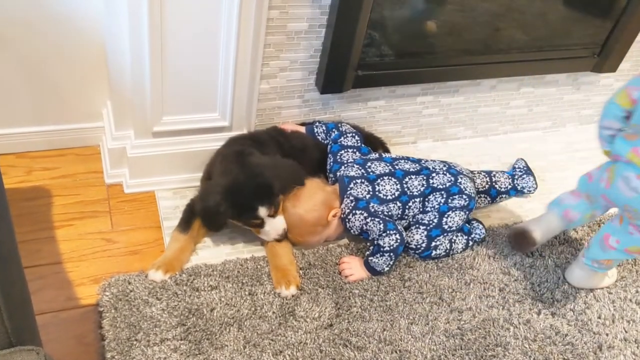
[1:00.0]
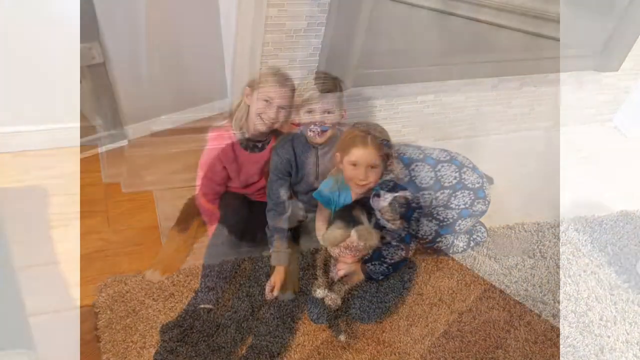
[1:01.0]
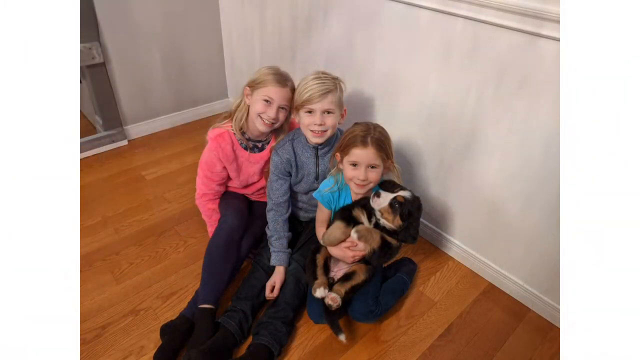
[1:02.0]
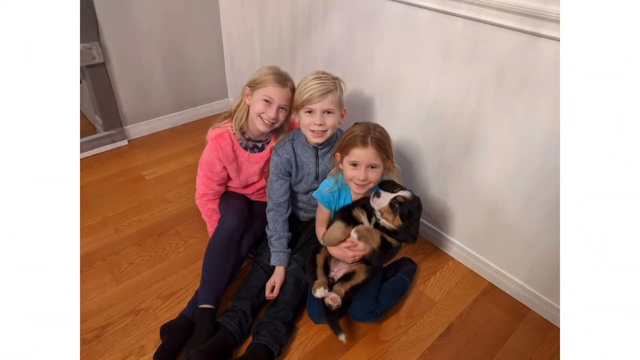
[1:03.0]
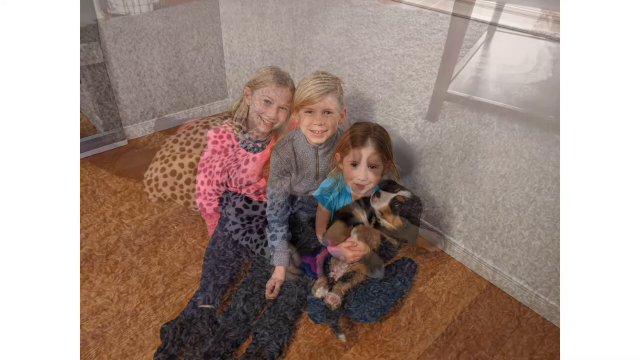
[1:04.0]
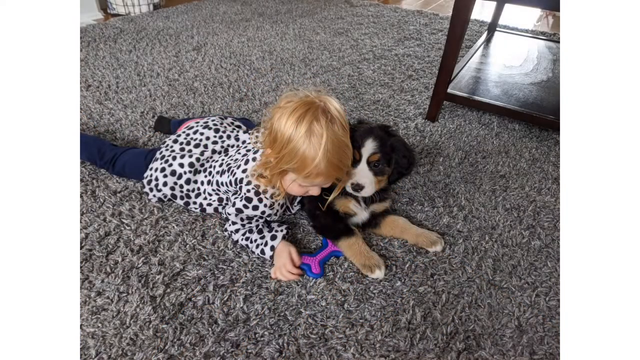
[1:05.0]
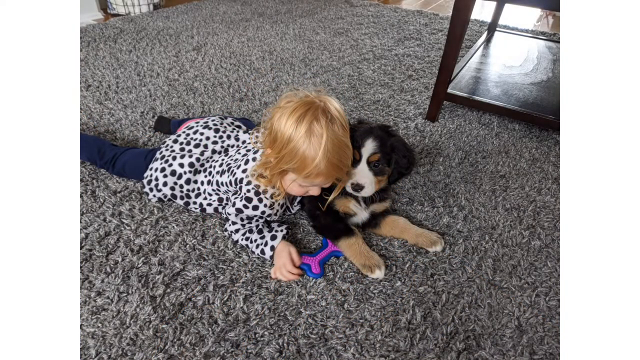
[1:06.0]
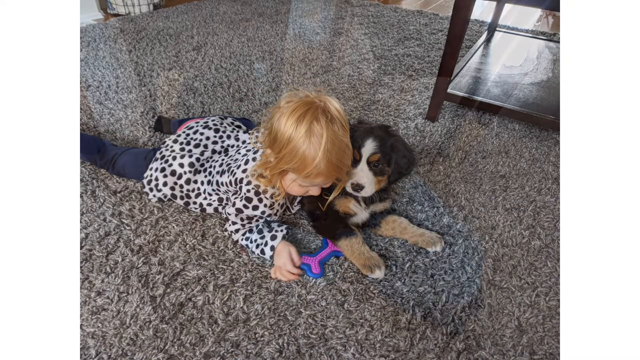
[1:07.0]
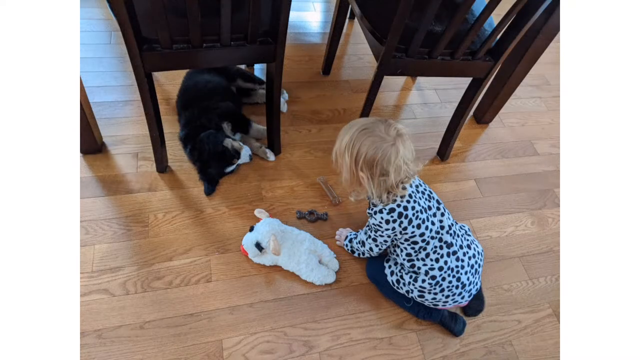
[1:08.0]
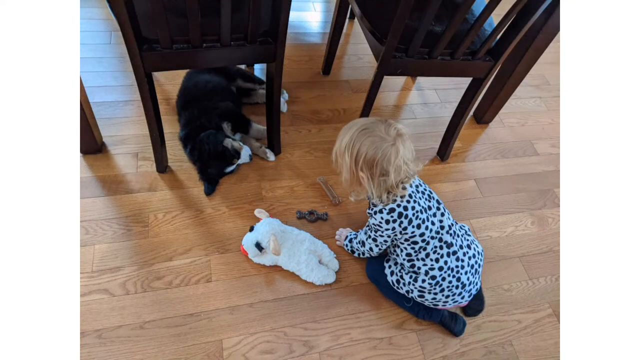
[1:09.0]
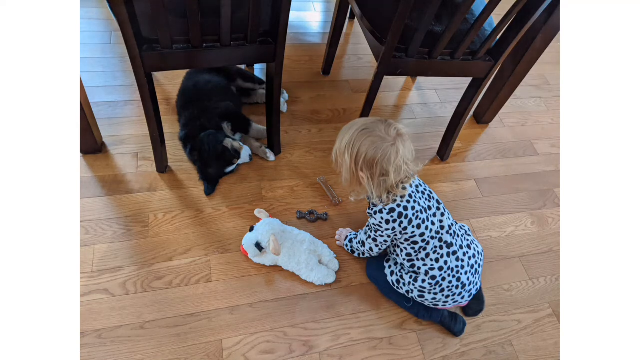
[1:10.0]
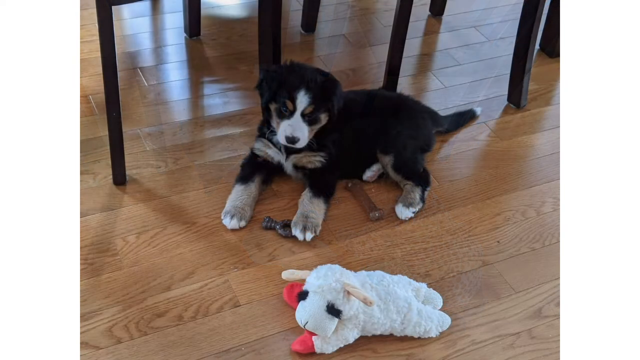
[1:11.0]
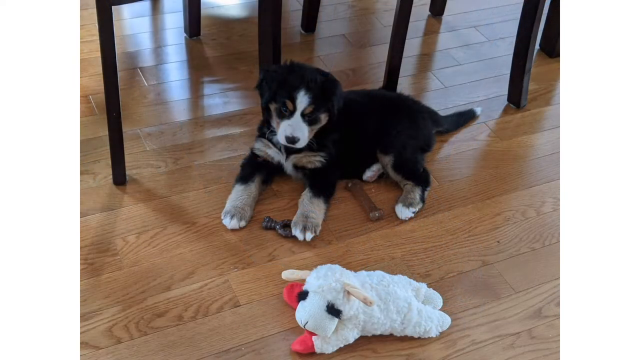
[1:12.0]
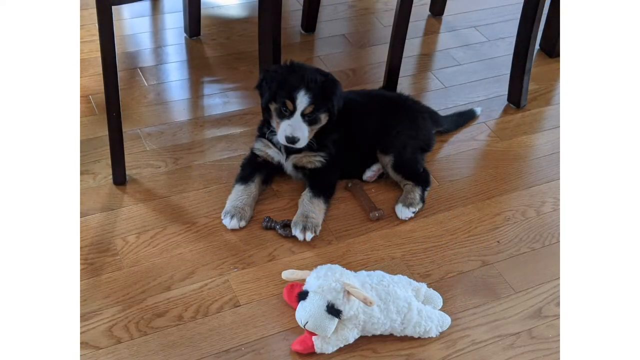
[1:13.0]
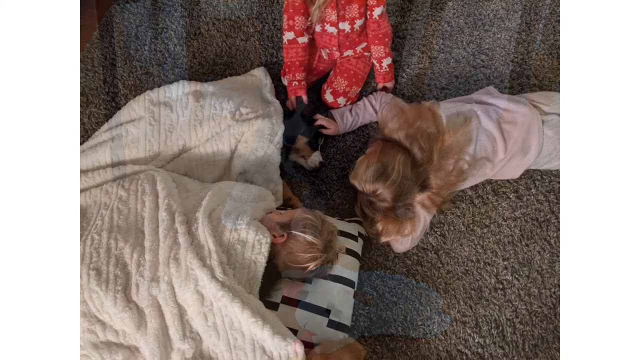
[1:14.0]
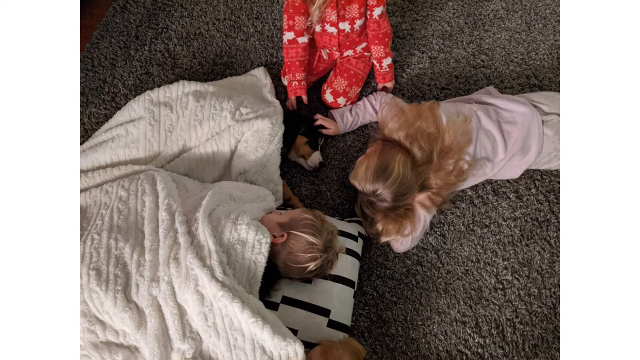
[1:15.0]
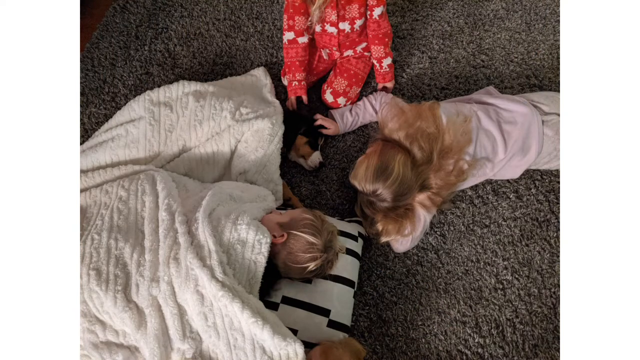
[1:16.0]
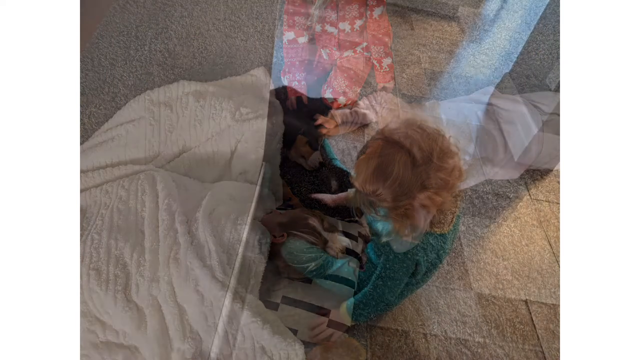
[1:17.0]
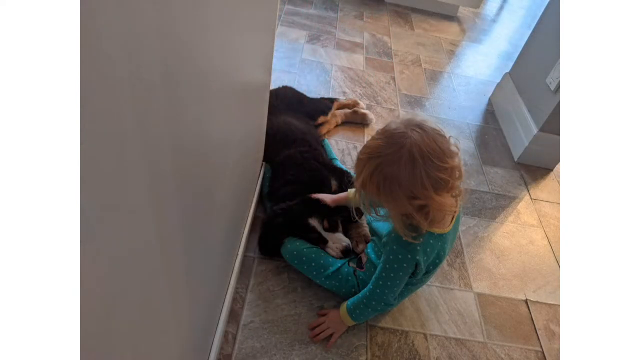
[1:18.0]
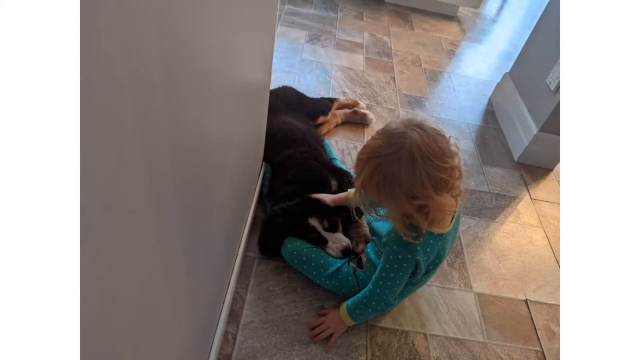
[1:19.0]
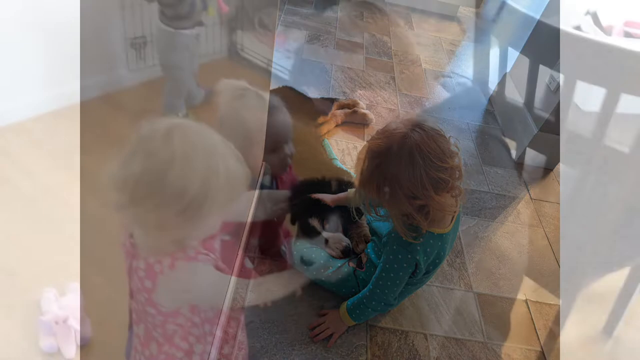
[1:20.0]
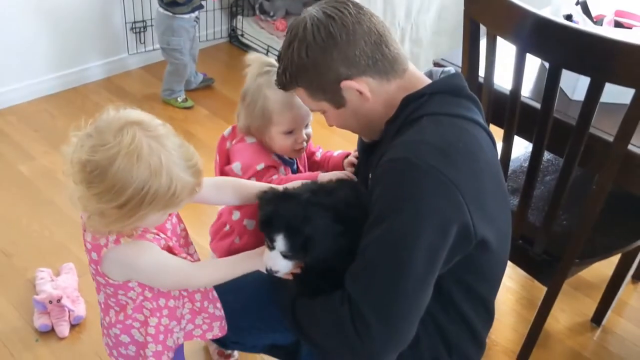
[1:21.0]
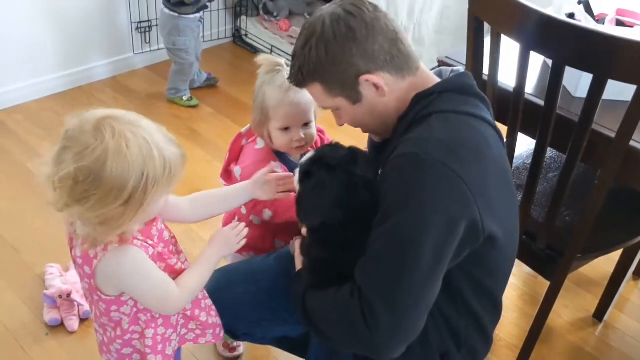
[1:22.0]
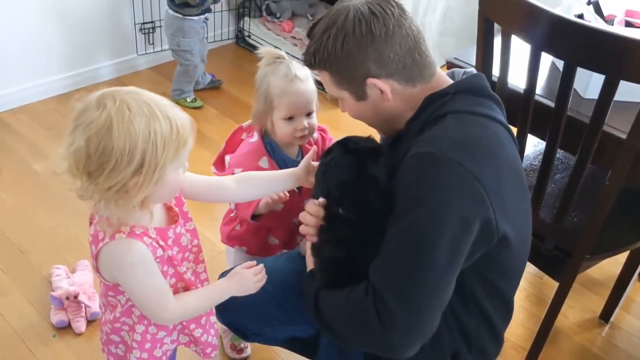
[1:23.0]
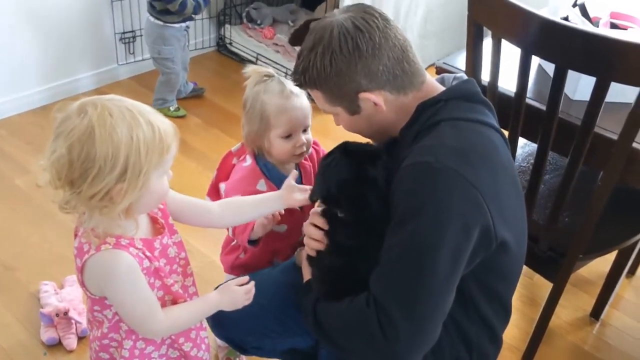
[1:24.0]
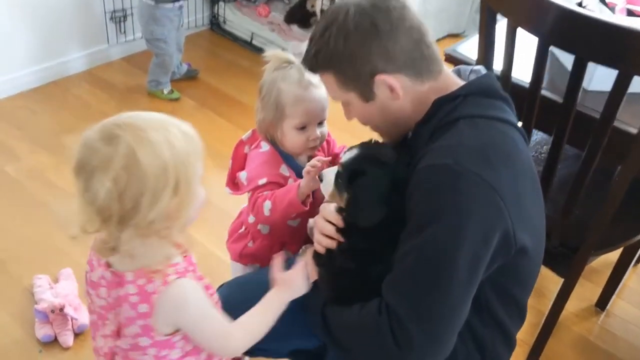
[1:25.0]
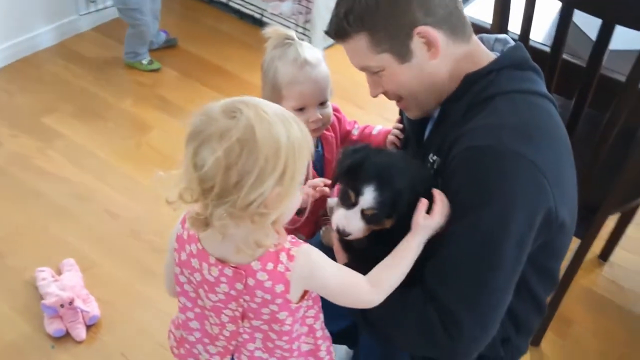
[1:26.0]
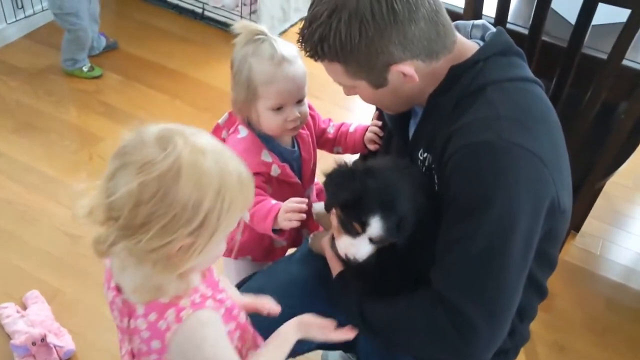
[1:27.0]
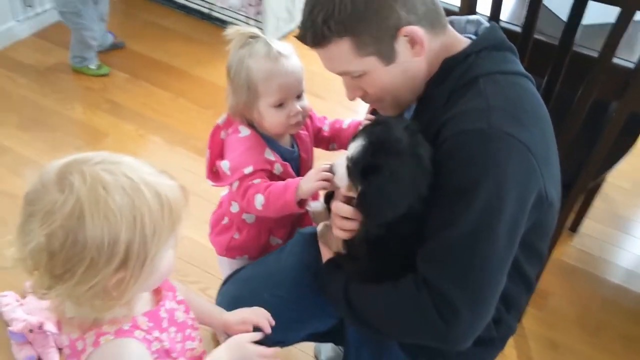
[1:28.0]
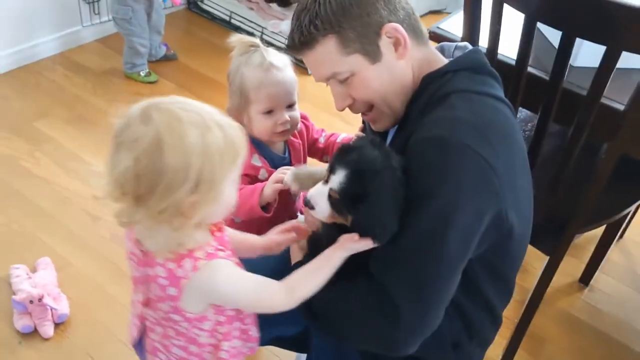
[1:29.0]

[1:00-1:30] In a house in front of a fireplace, the puppy is lying on the floor next to a rug. The little boy is on the rug next to the puppy, his head nuzzled against the puppy's side, while the little girl walks away from the scene. The video then cuts to a photograph of three children sat on the floor, with a little girl holding a puppy; it looks like a family photo with the same puppy. Next comes another photograph, of the puppy with a little girl who has blonde hair and wears a black and white dotted top. Further photographs follow: one in the house with the puppy, one of the puppy on the floor, another of the children with the puppy, and many different photos of the dog with the family. Another scene shows two little girls with the puppy and what looks like their father.